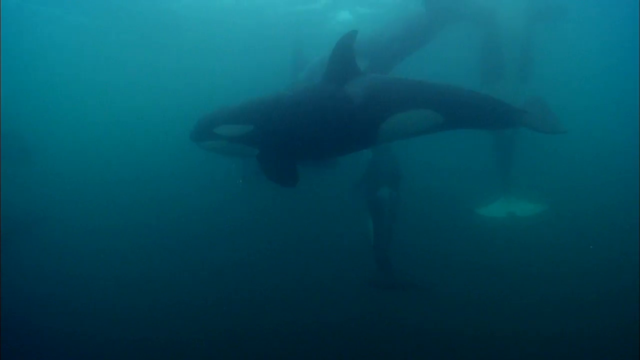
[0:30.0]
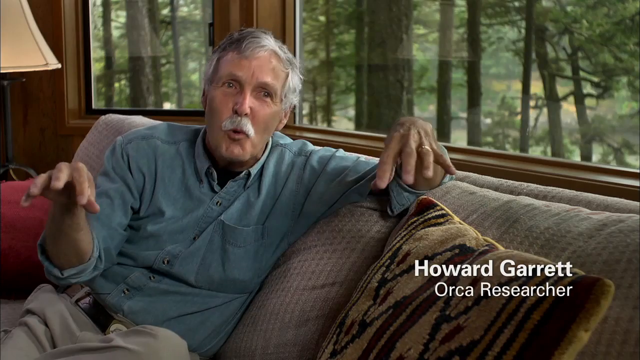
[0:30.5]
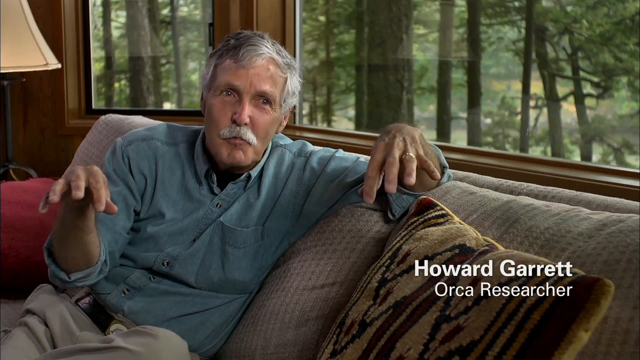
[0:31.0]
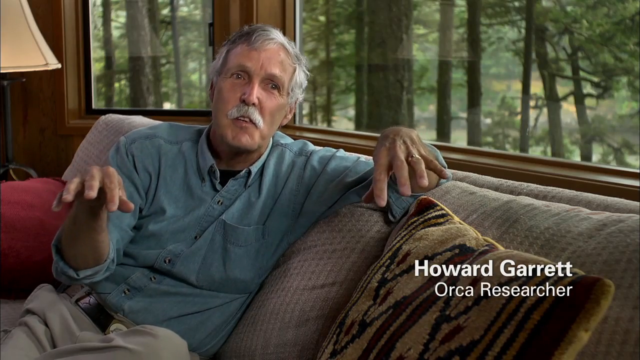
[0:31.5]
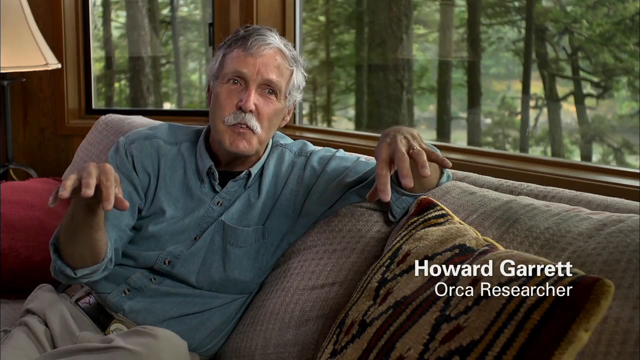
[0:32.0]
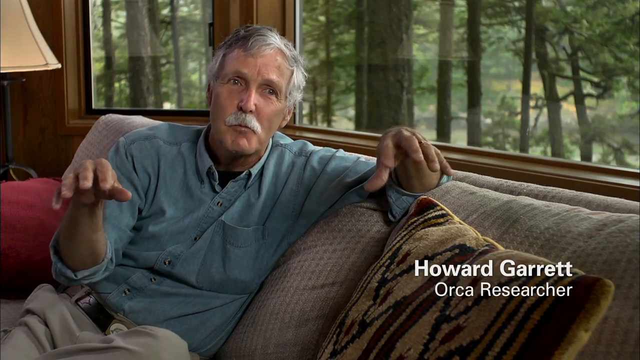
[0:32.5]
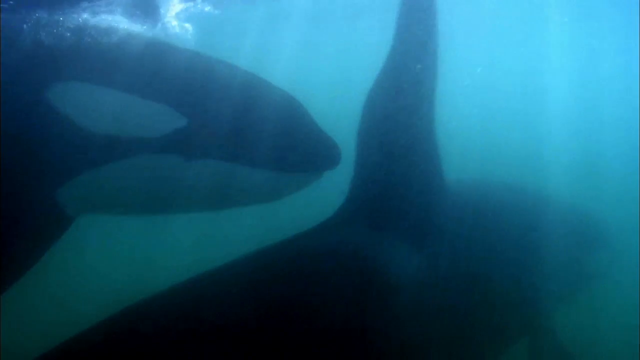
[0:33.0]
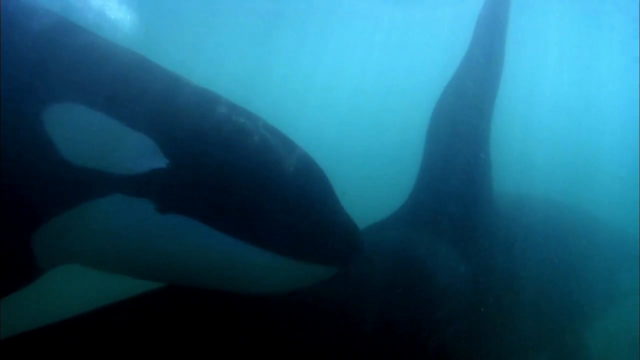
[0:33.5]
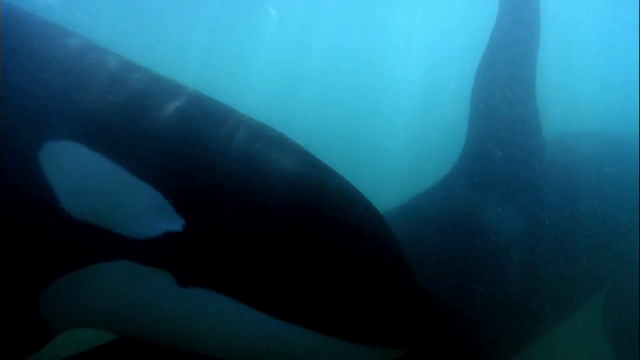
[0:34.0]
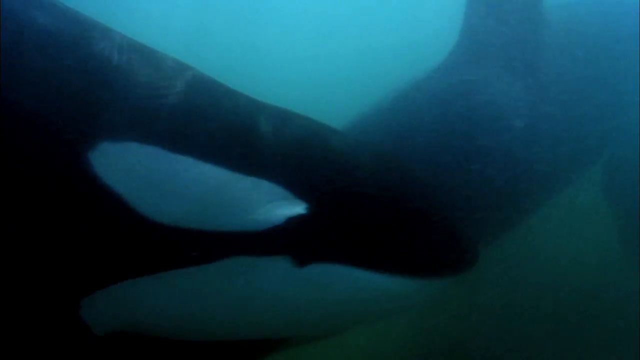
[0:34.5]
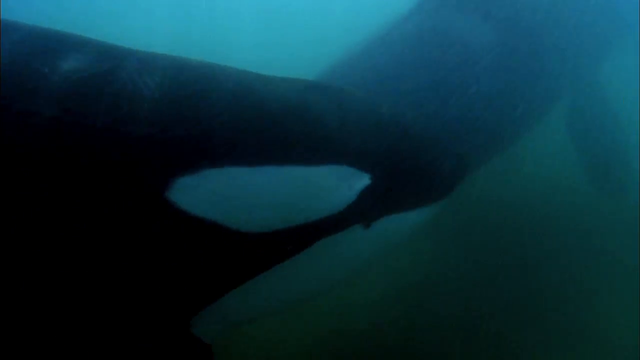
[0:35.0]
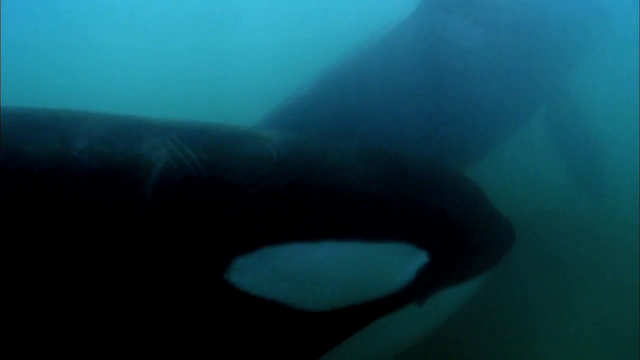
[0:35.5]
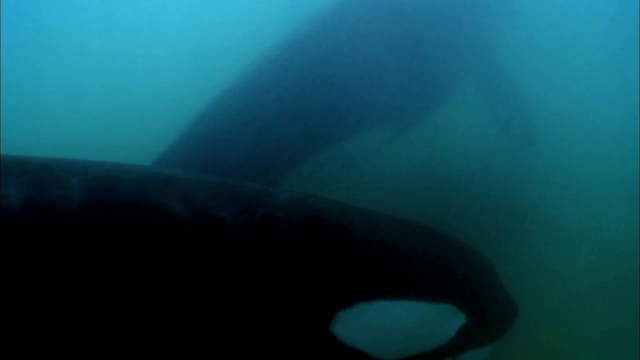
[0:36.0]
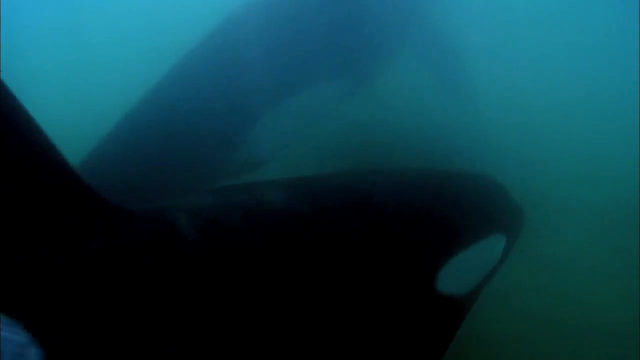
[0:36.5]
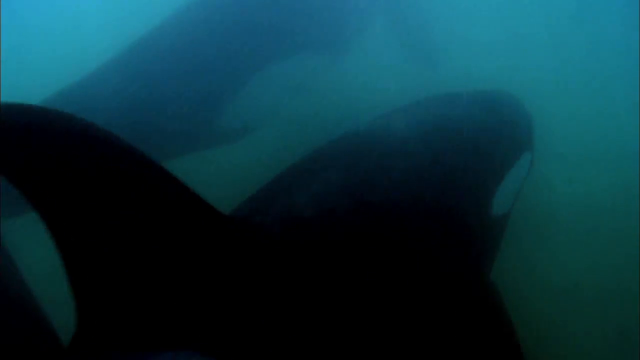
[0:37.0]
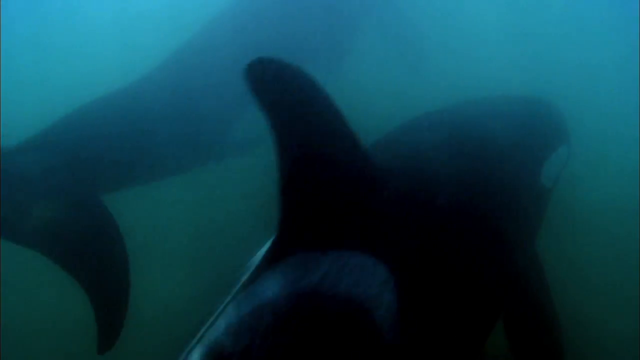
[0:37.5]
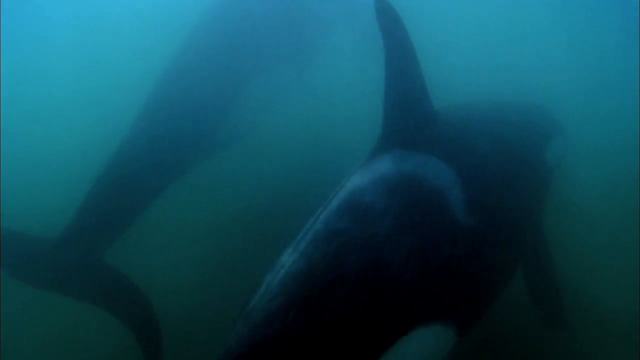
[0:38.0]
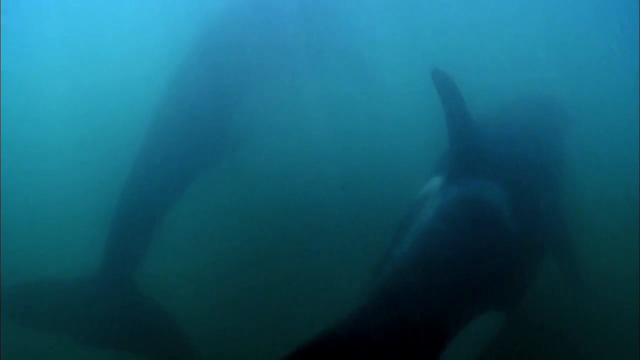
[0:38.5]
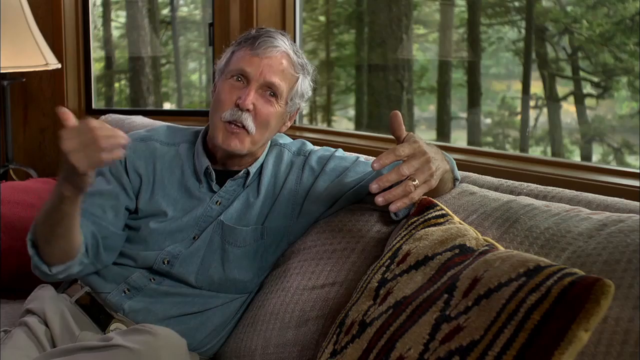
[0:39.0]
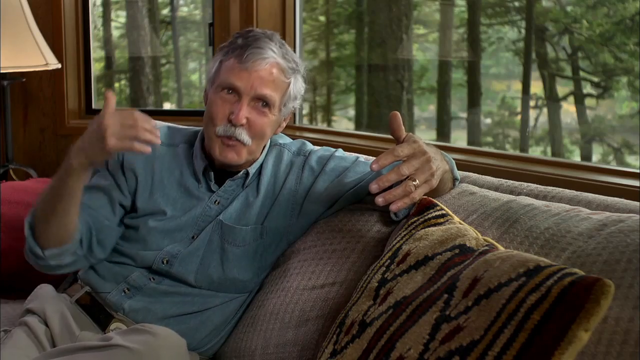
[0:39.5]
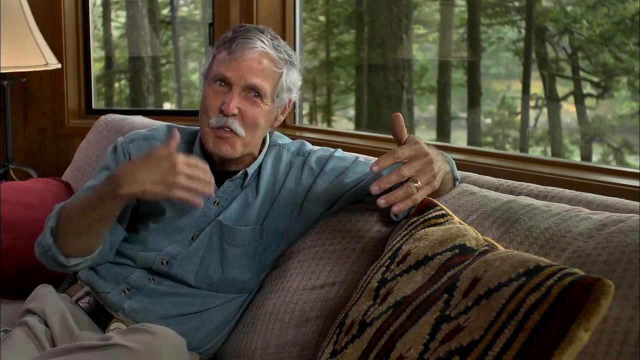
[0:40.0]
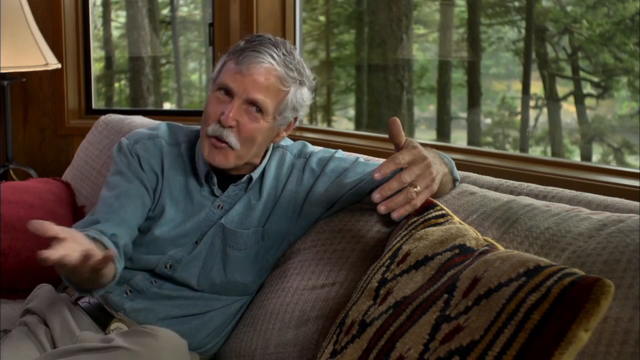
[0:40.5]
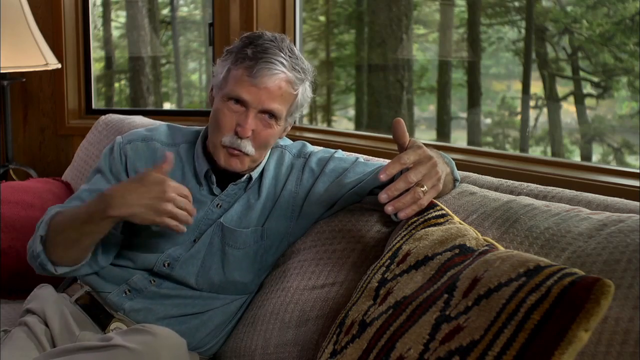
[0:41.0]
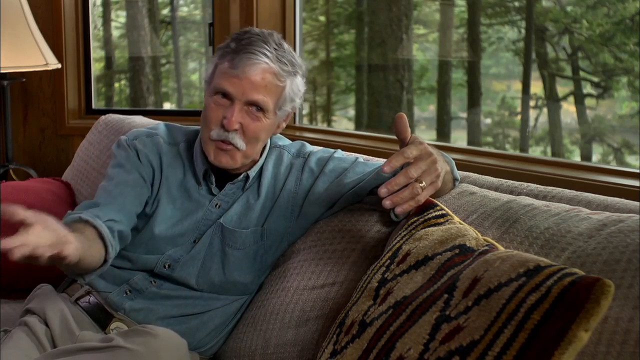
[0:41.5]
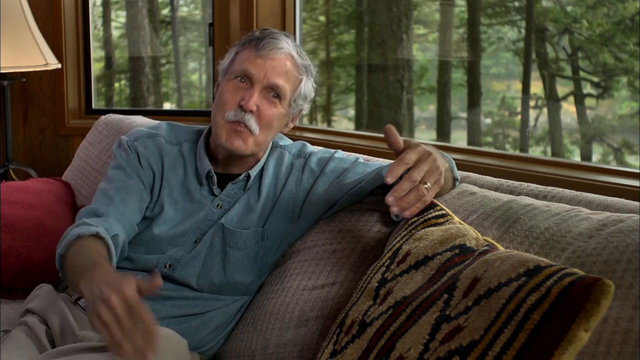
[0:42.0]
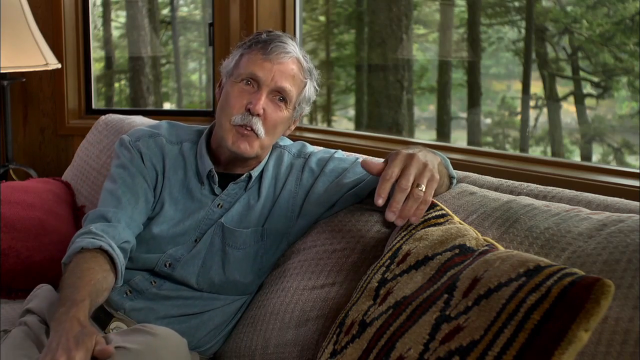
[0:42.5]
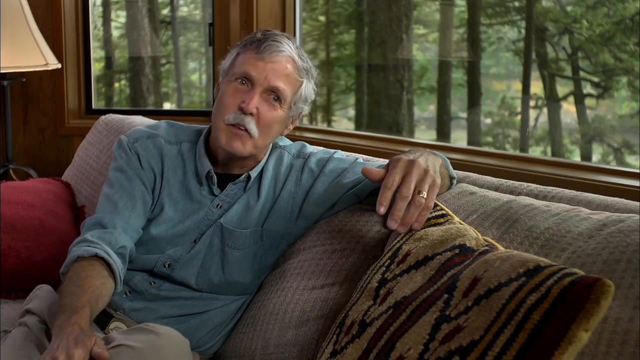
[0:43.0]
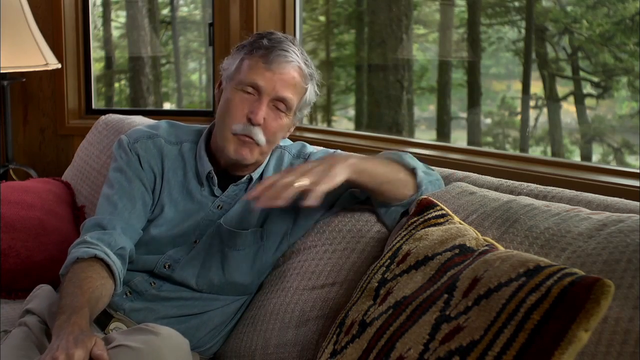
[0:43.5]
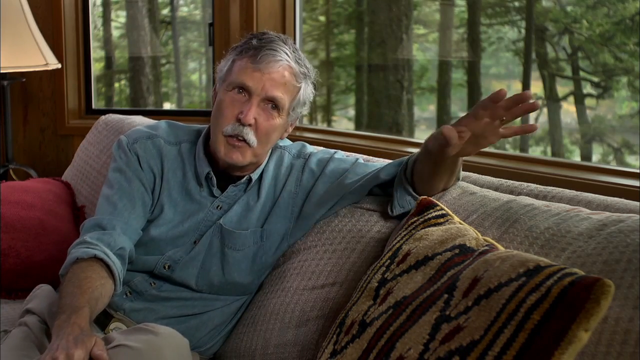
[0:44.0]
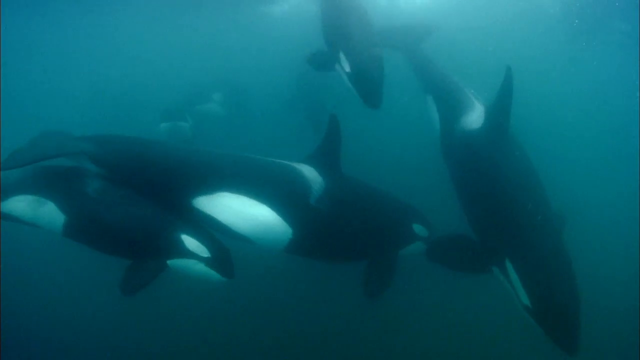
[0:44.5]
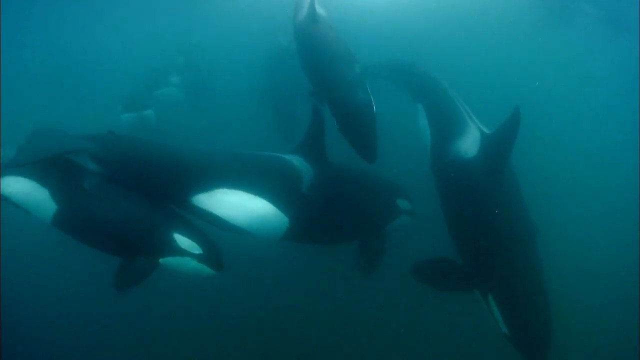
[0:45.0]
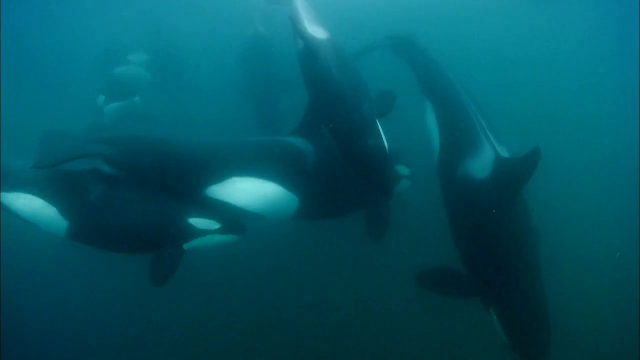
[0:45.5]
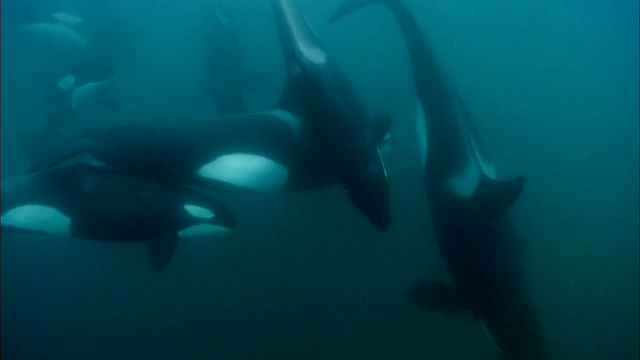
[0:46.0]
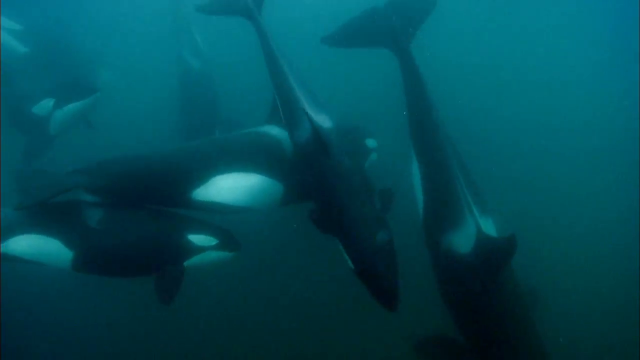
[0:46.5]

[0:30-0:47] The whales, white and black, swim around together, and the little babies follow their mother. The setting seems not to be the ocean but rather a place where sick or hurt marine life is brought, or possibly a research facility. The man seen earlier appears and is introduced as Howard Garrett, an orca researcher, and the animals are identified as orcas rather than killer whales. Several different shots show them swimming around. Howard sits on a couch in a blue shirt and talks, apparently about the orcas or possibly the research facility.